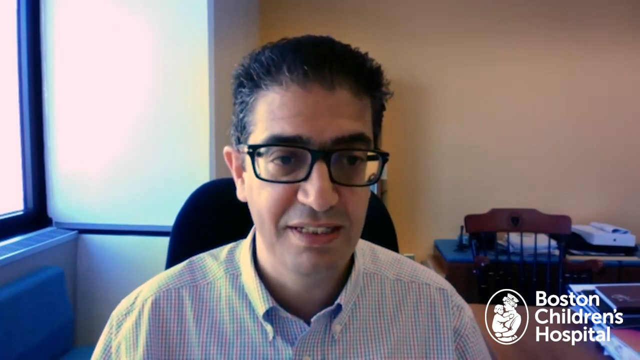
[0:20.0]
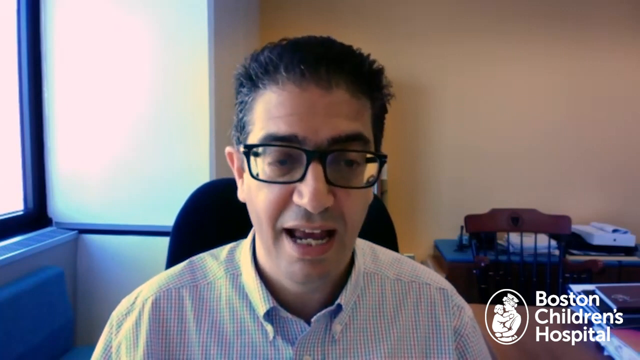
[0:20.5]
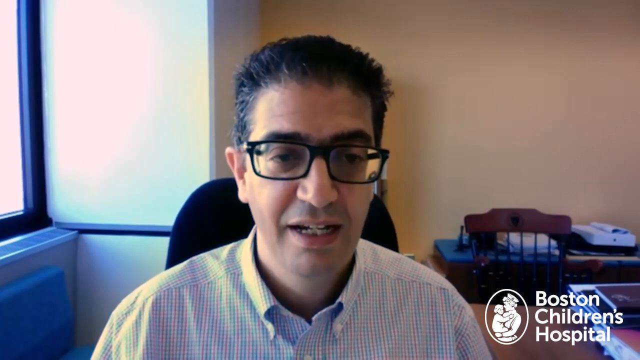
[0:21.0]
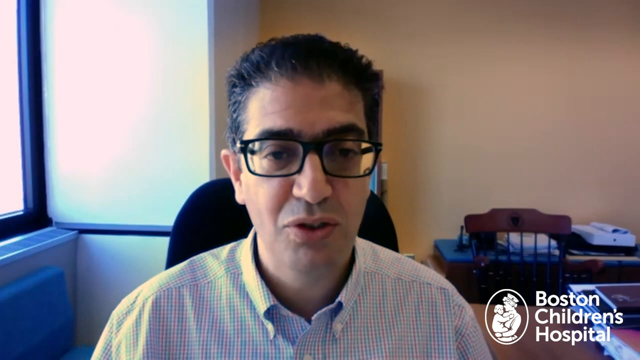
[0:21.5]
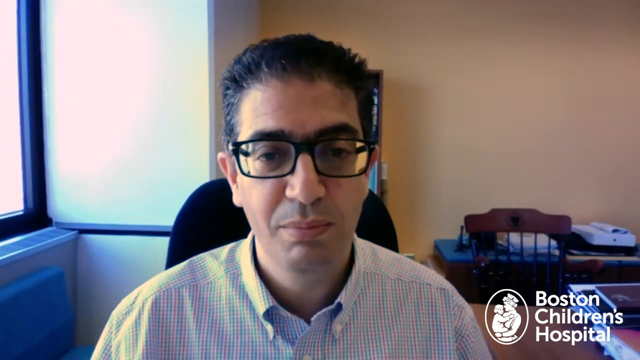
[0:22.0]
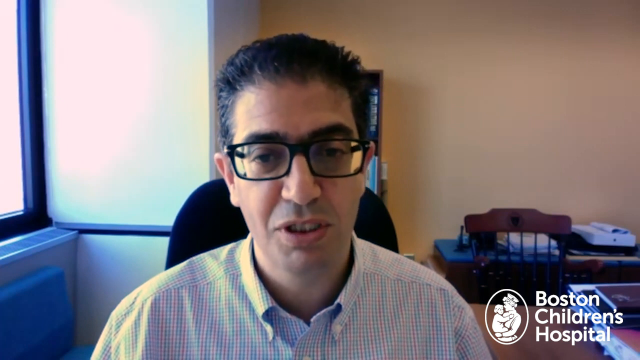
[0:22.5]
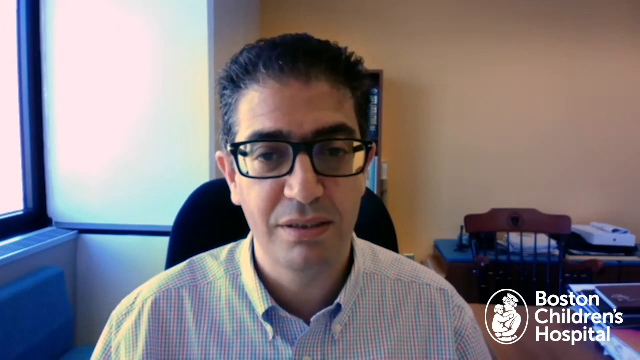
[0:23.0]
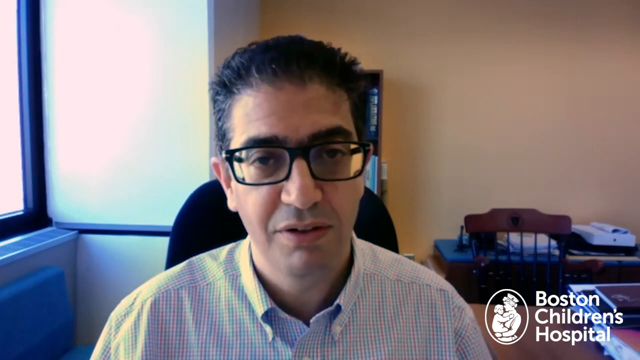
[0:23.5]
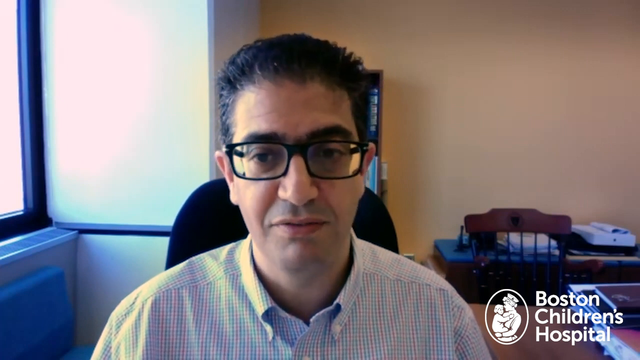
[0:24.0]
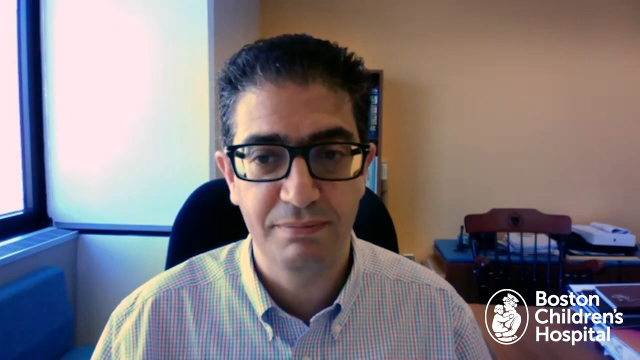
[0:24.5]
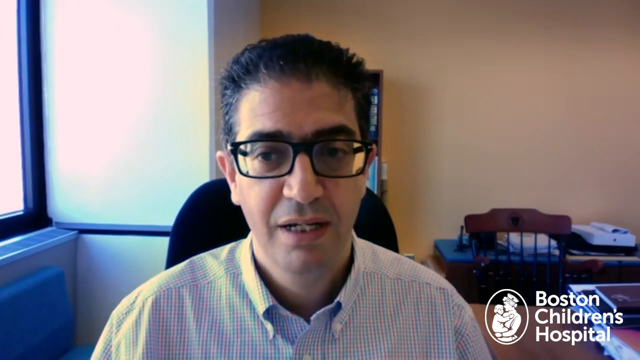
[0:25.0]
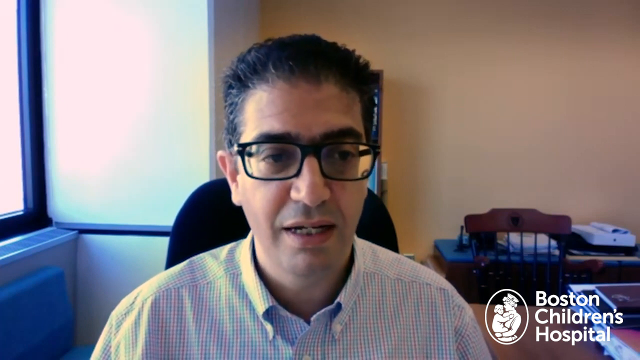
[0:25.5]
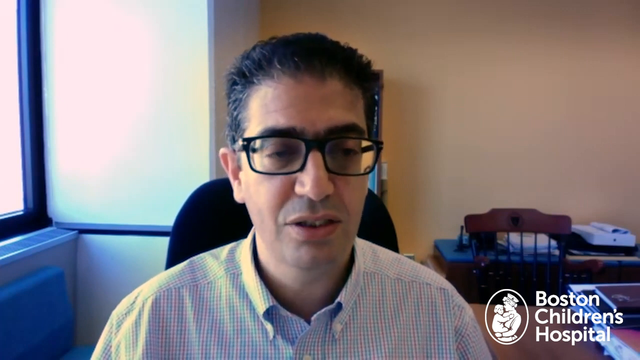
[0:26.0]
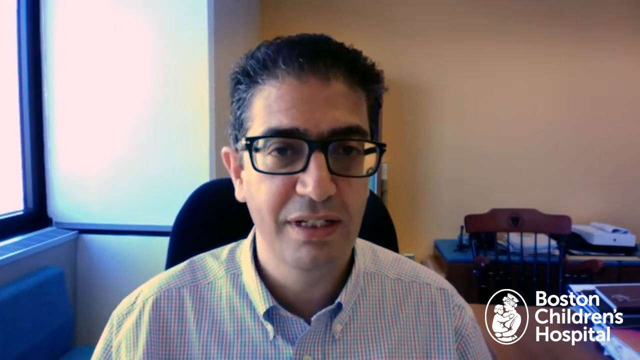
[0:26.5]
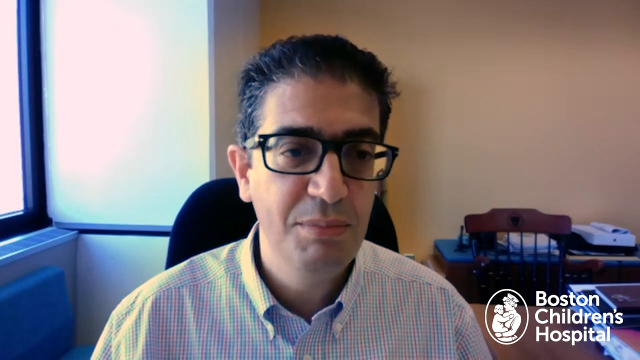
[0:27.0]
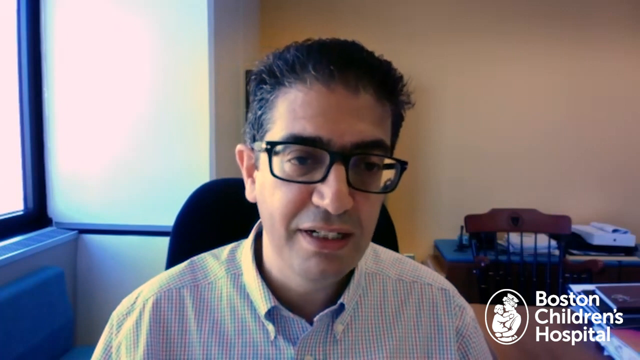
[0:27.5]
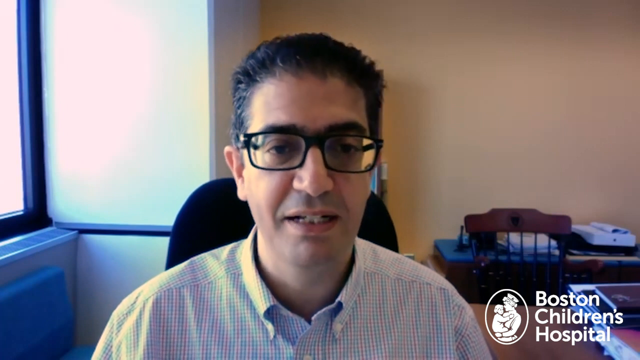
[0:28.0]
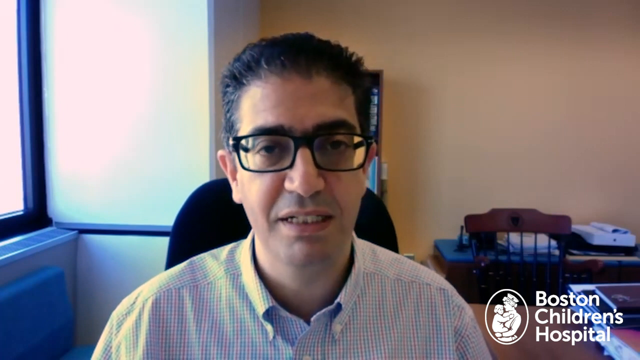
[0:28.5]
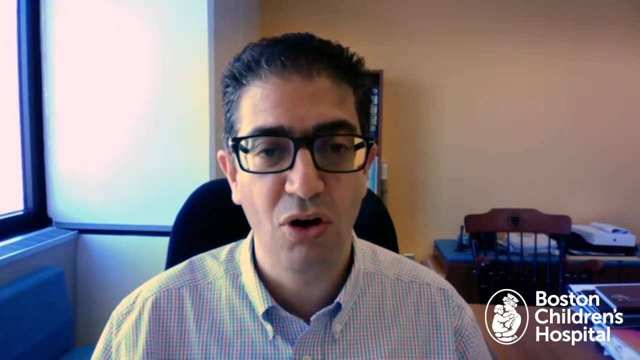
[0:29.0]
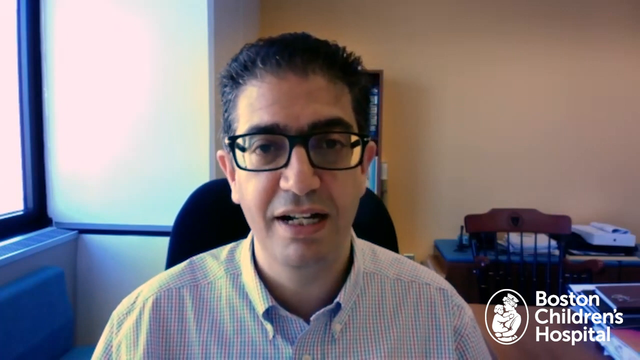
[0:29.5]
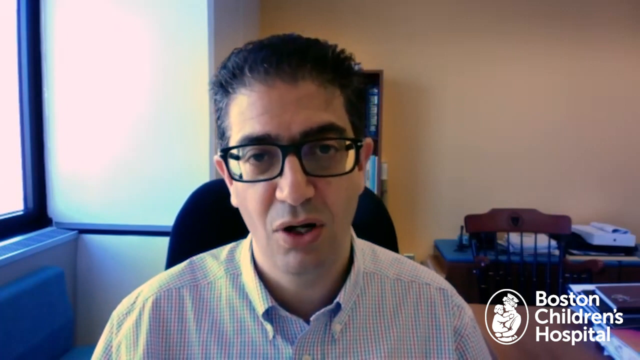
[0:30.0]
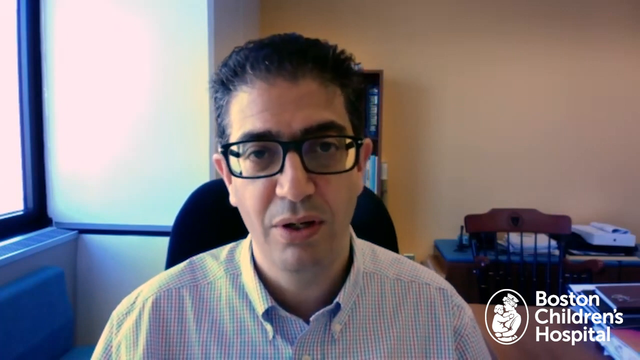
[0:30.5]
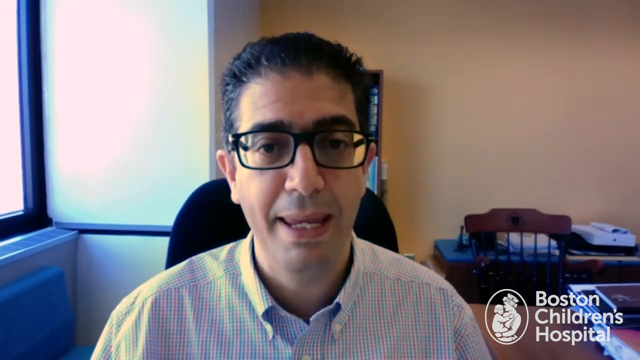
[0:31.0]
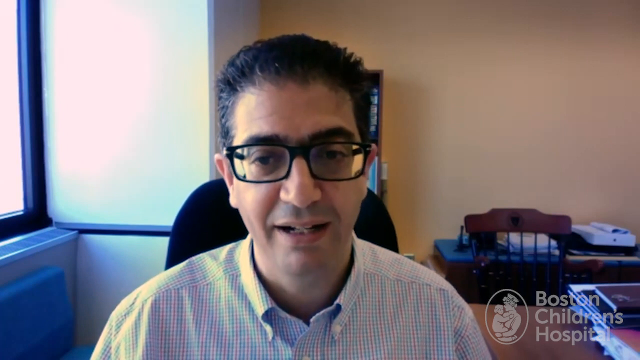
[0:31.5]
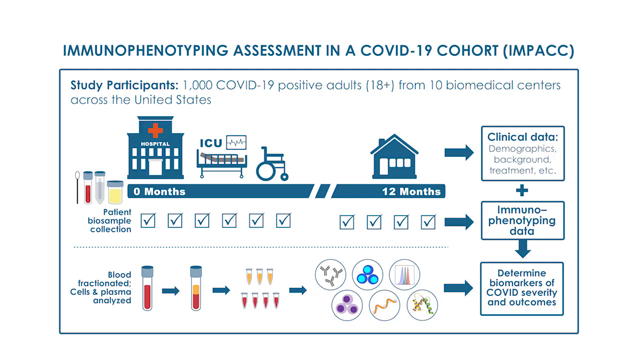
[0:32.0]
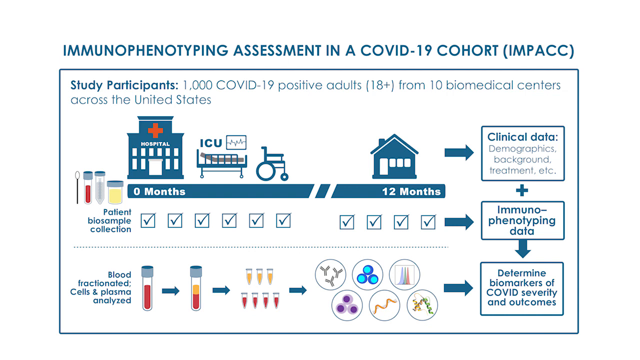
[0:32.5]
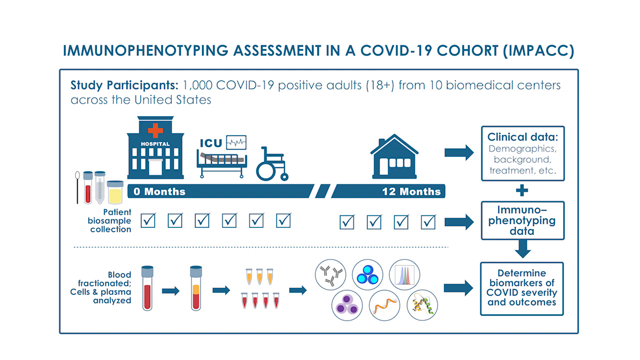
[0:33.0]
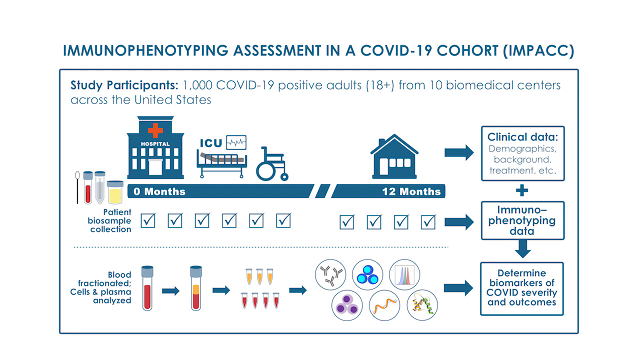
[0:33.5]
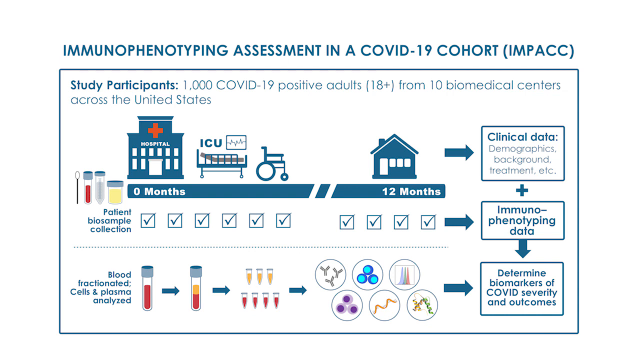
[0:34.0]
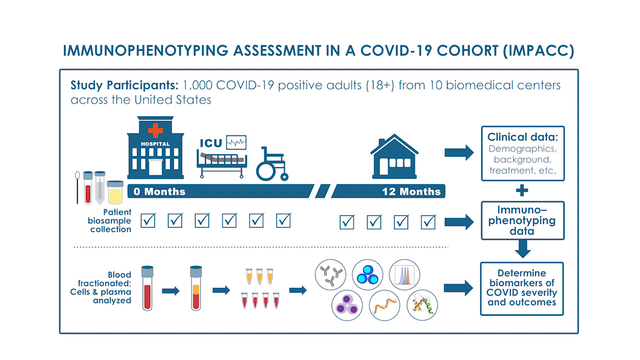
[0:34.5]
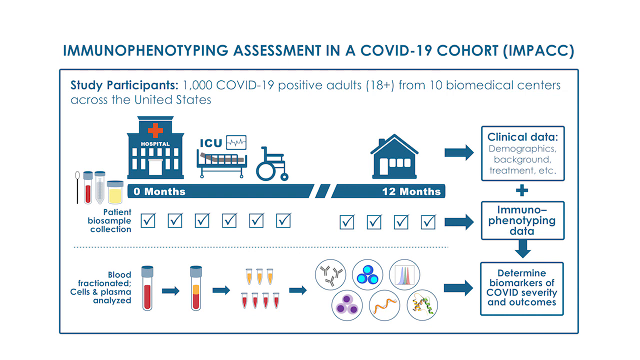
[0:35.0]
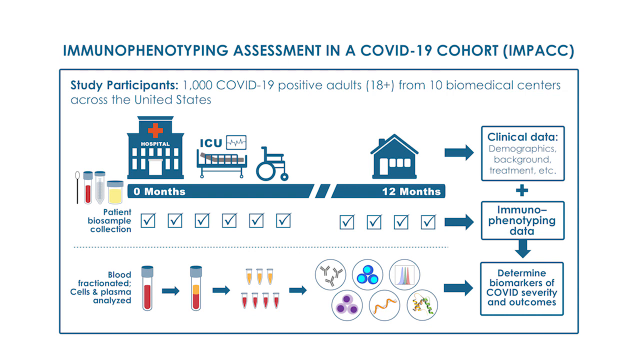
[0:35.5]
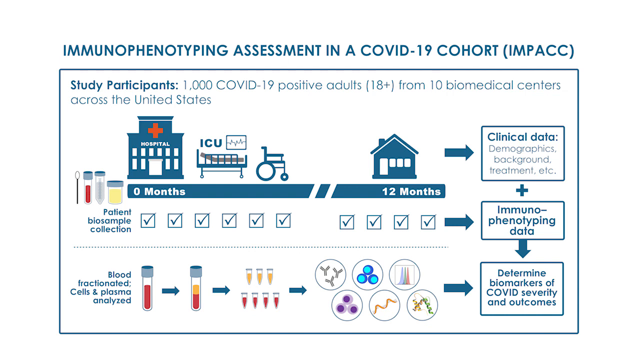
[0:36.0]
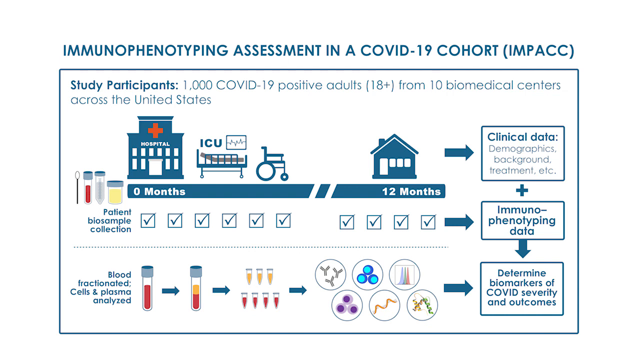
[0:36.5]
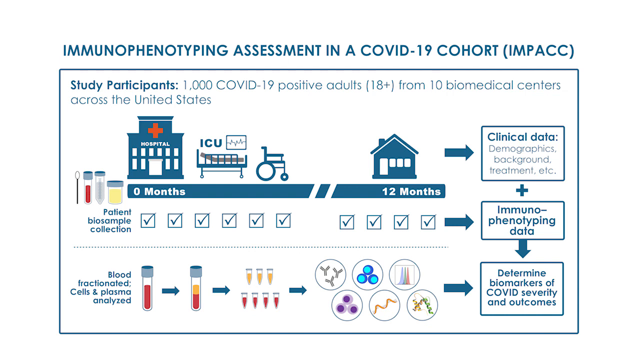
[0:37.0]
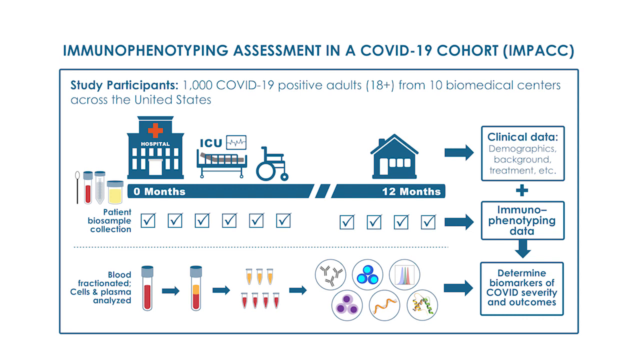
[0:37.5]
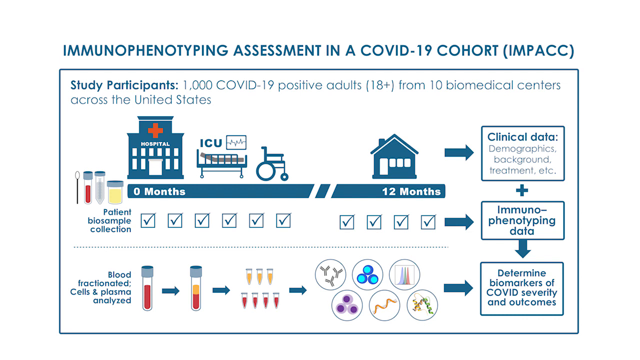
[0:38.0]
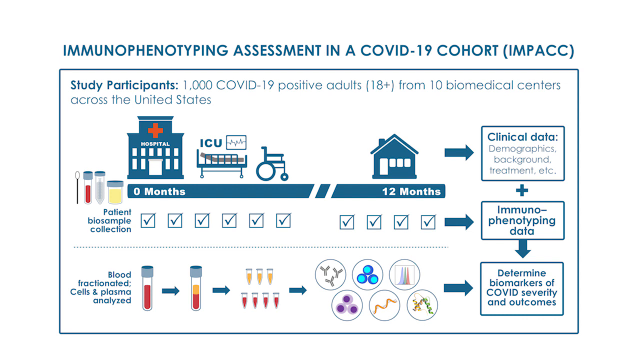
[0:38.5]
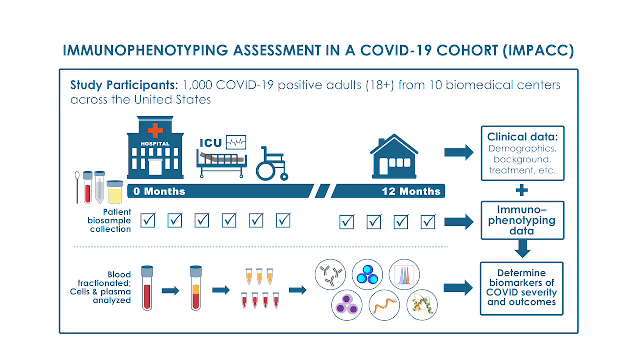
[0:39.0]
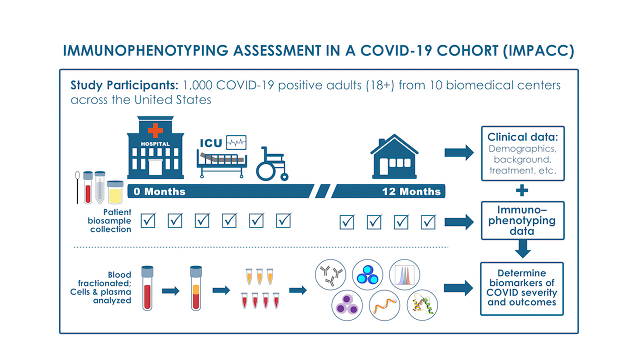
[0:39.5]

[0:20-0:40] While speaking toward the camera, the man moves his head slightly, at one point looks down to his right, and occasionally looks down. A drawing appears of the immunophenotype assessment in a COVID-19 cohort, IMPACC: a white square block lined in blue. Inside the block are the study participants: 1,000 COVID-19 positive adults, 18-plus years old, from 10 biomedical centers across the United States. On the left inside the box are a small syringe, a red tube, a clear tube, and a shorter square tube with yellow in it. A blue line runs halfway across the screen, marked 0 months, then two white slanted lines, after which the rest of the blue line leads to 12 months.